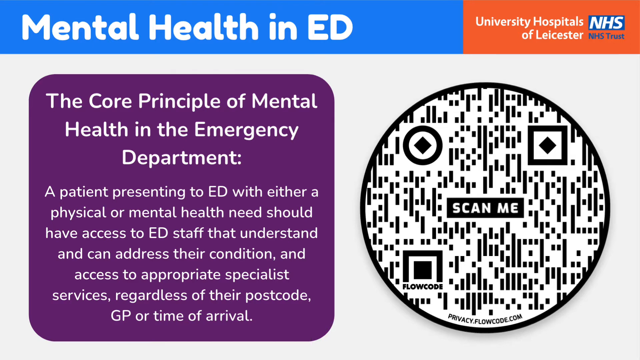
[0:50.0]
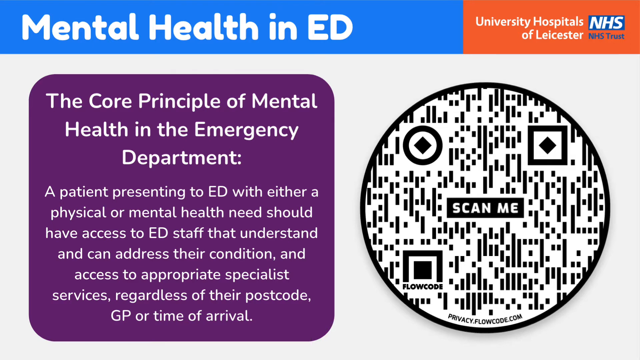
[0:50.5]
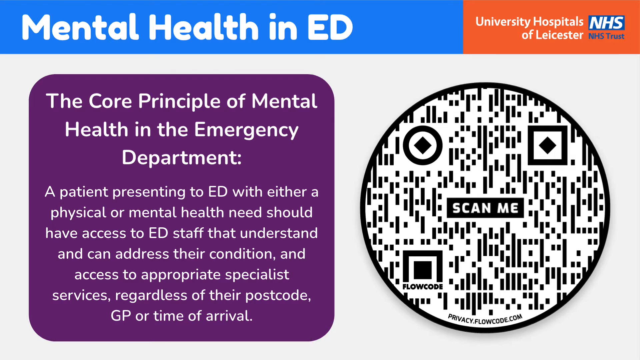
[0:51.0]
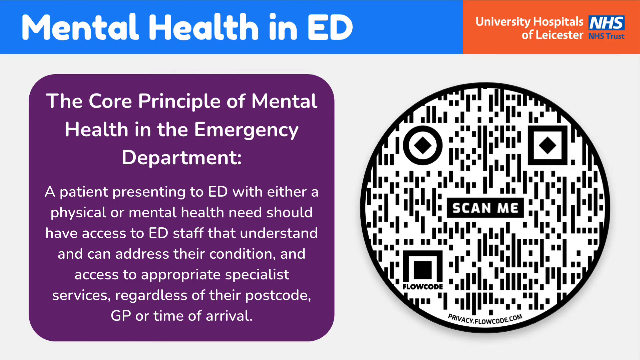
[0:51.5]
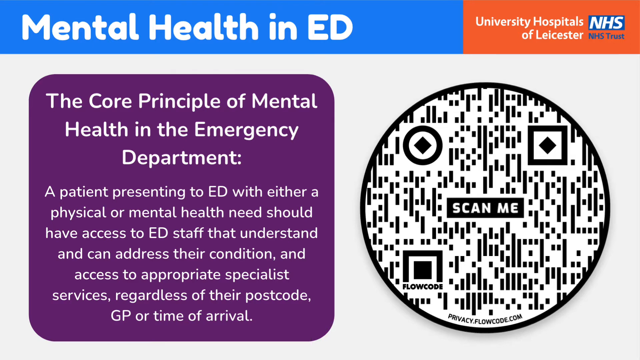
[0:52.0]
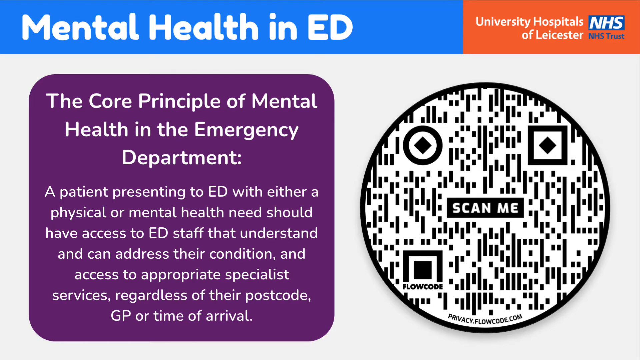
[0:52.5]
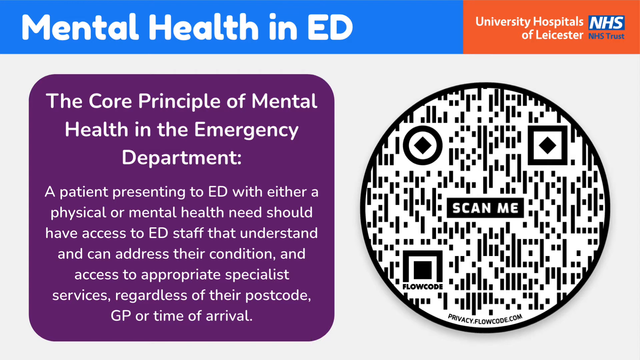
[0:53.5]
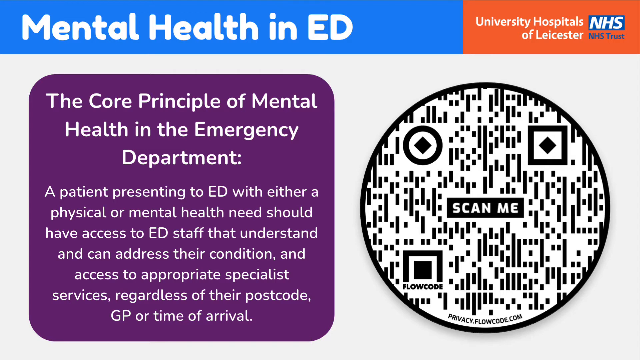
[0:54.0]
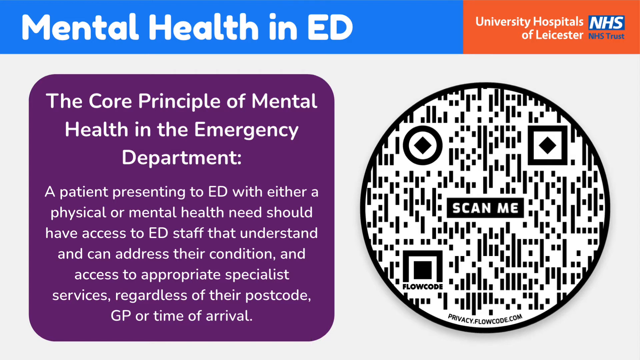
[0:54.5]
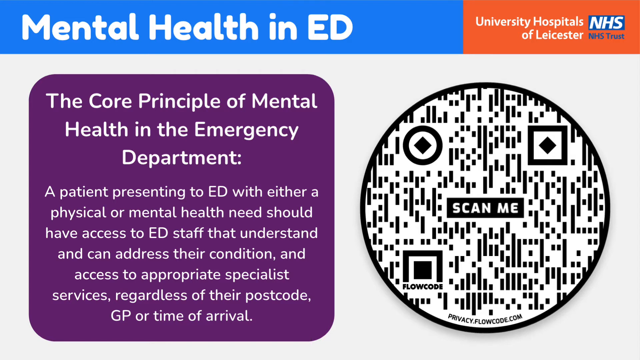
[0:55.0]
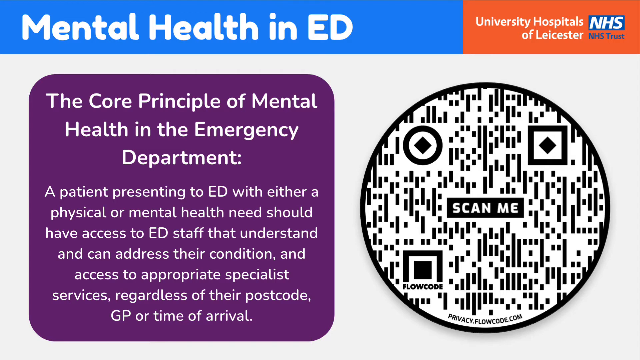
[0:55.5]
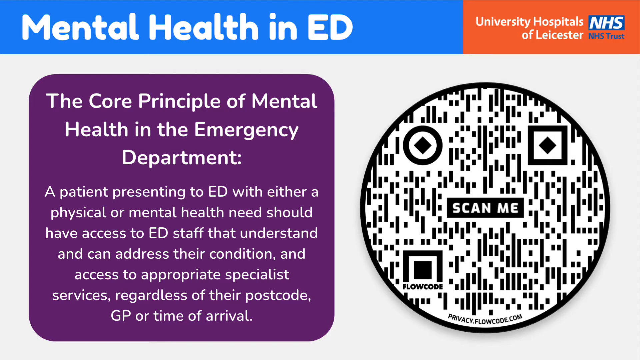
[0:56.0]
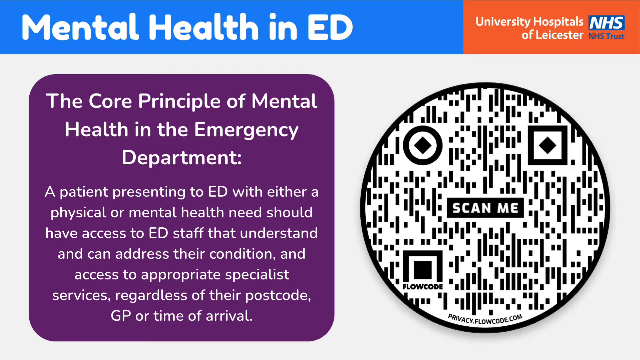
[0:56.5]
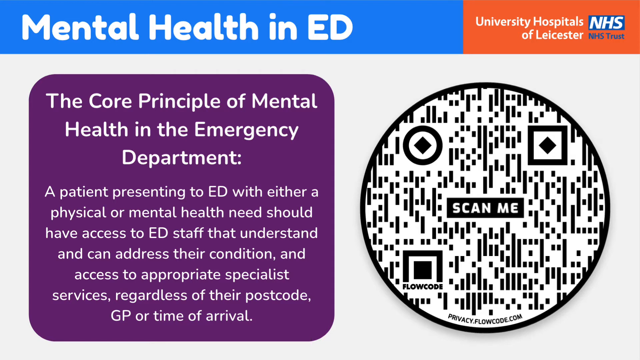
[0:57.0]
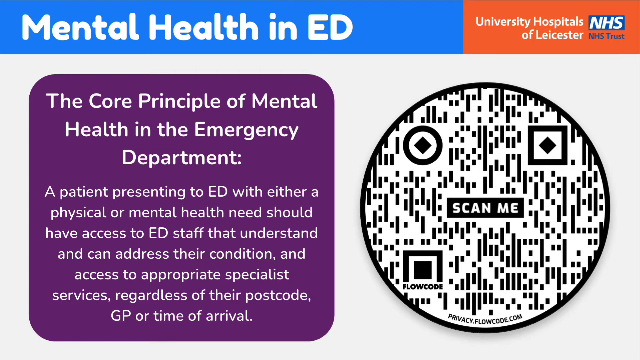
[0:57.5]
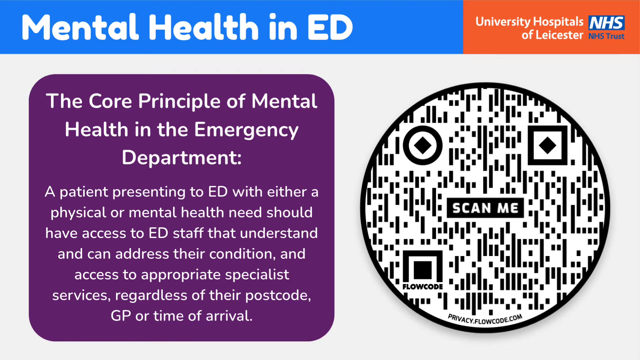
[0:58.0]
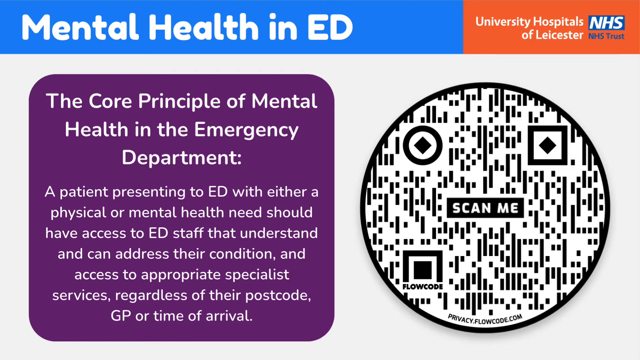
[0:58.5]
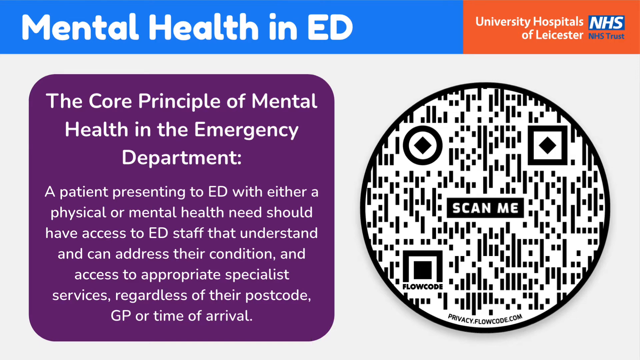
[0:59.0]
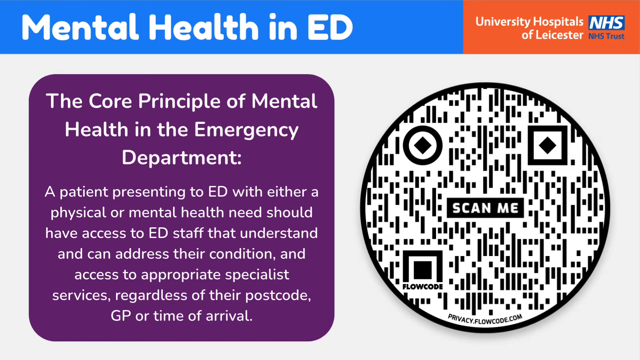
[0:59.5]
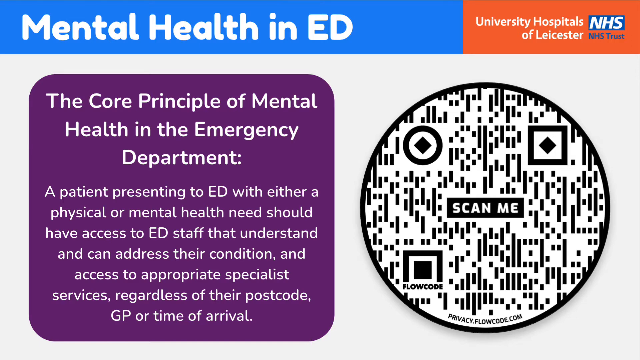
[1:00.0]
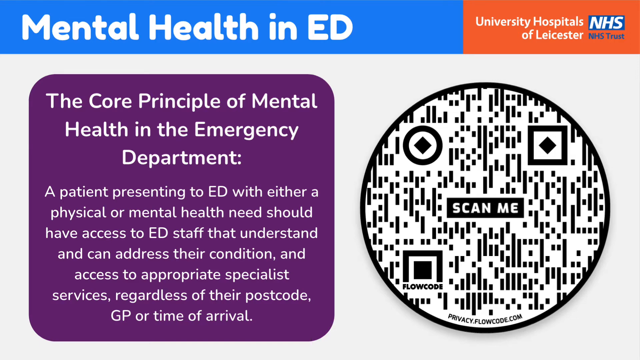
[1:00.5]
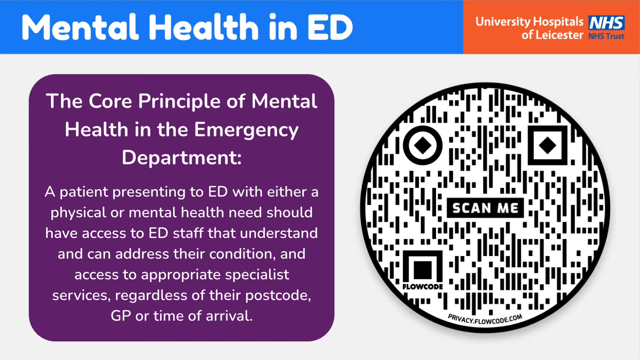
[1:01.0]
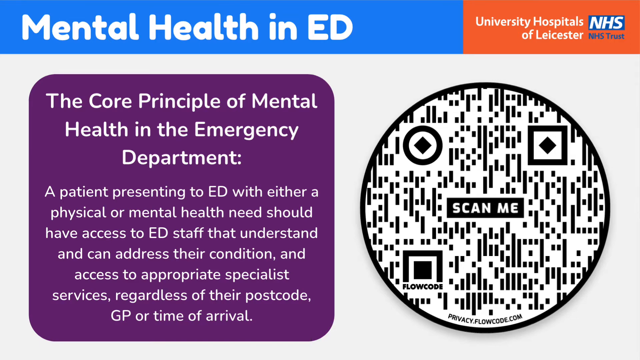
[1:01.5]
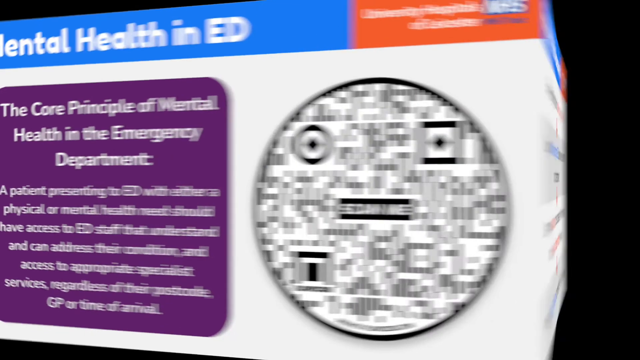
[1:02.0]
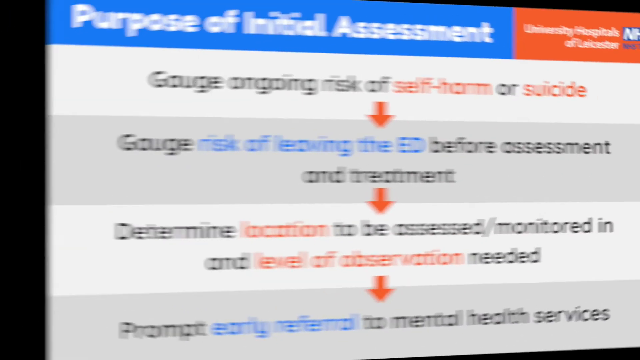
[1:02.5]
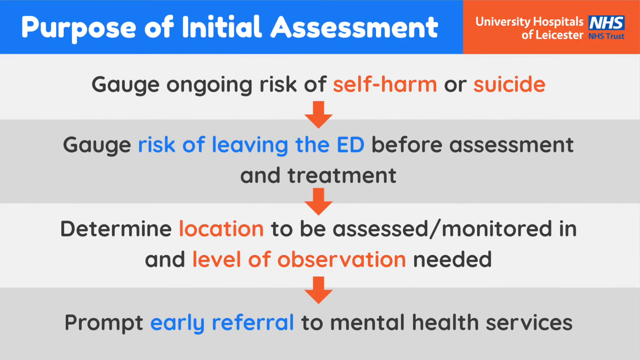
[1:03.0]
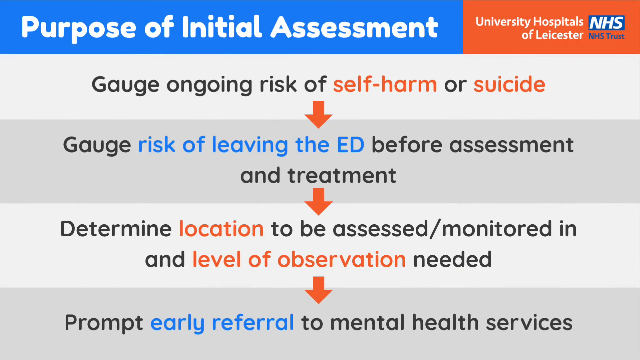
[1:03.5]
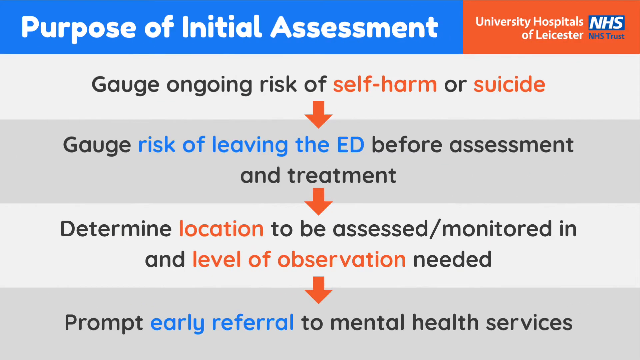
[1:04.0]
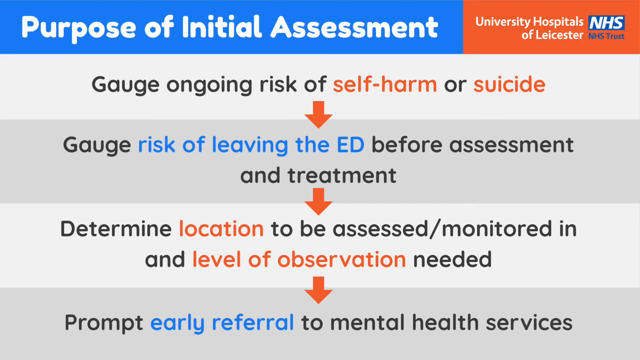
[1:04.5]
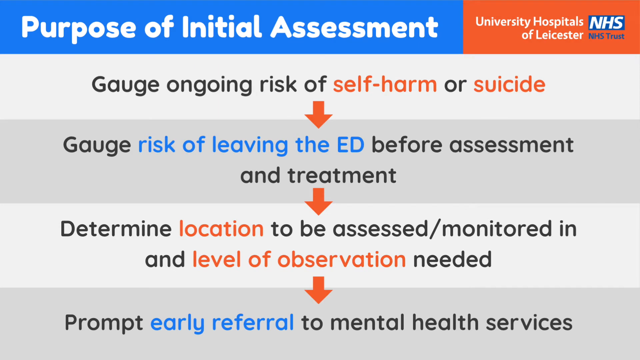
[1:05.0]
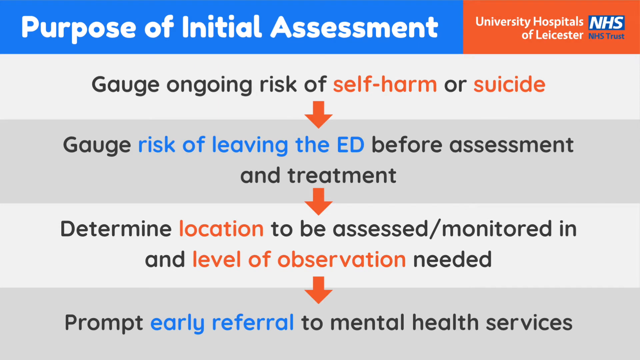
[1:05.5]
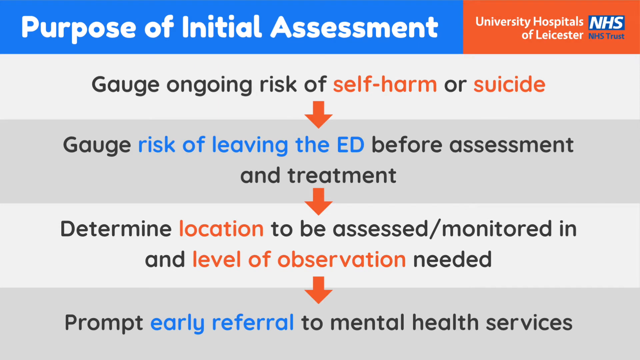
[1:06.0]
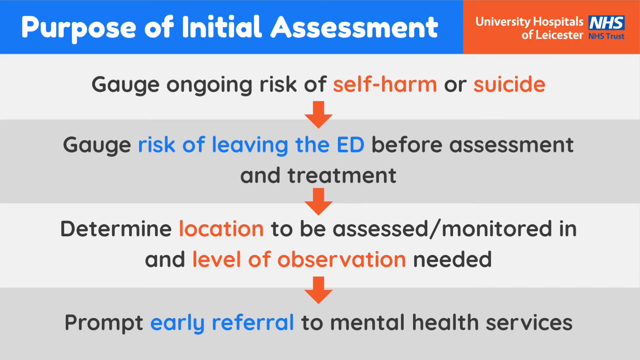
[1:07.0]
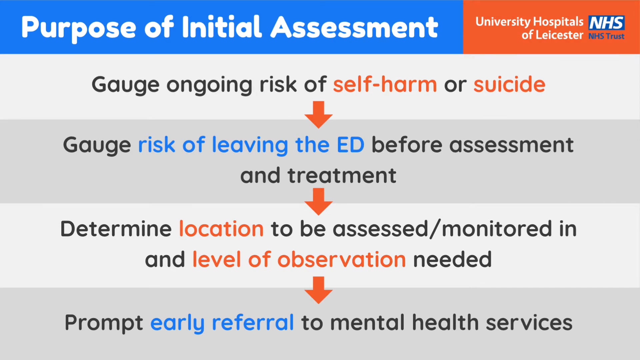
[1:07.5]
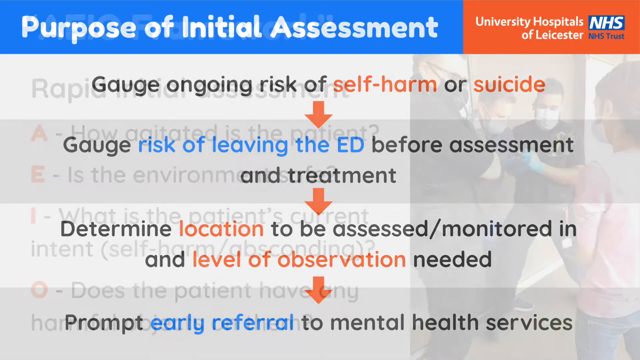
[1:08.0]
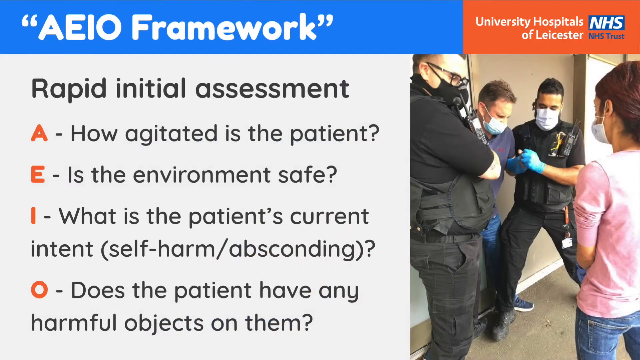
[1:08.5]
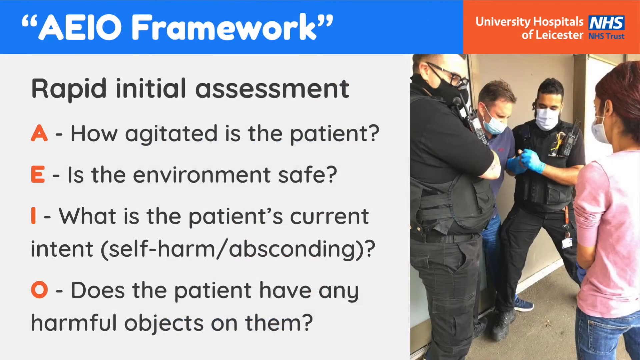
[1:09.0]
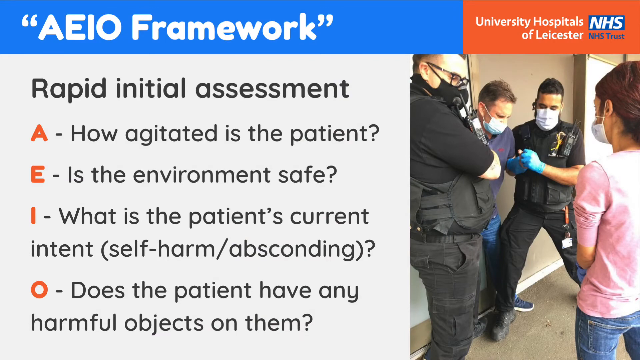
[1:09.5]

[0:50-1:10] A page on the core principle of mental health in the emergency department states that a patient presenting to the ED with either physical or mental health needs should have access to ED staff who understand and can address their condition and provide the services they need. "Mental health and ED" is written in white on blue at the top, with a black-and-white circle next to it that says "scan". "The purpose of the initial assessment" is written at the top in white on a blue background, and the page lists self-harm or suicide, leaving the ED before assessment, the location to be assessed and monitored, and prompt early referral to mental health services. The next page gives a very brief glimpse of what looks like the emergency department: a staff member leans against a wall, there appear to be patients in front of them, and there appears to be security holding on to a patient. There is a write-up on the left-hand side.